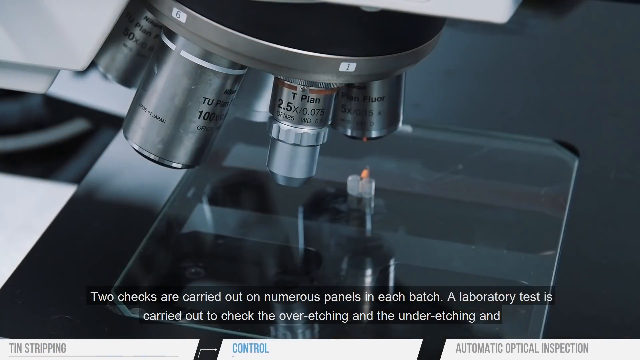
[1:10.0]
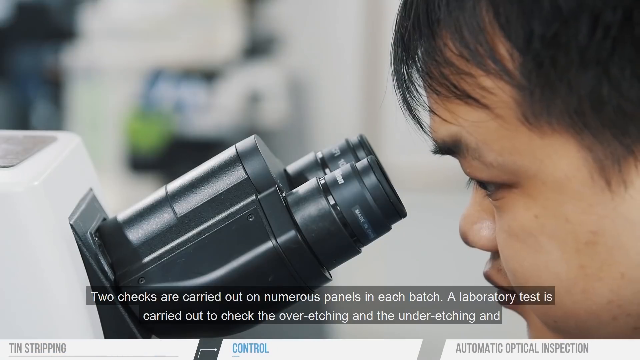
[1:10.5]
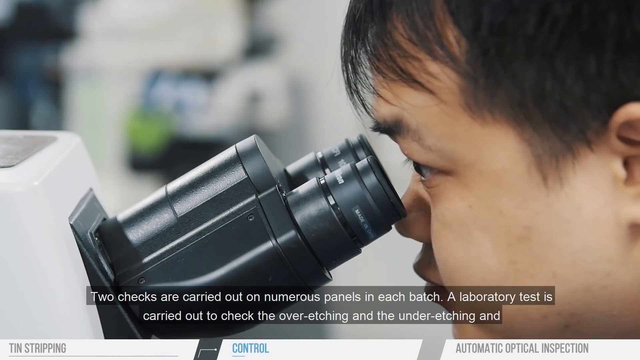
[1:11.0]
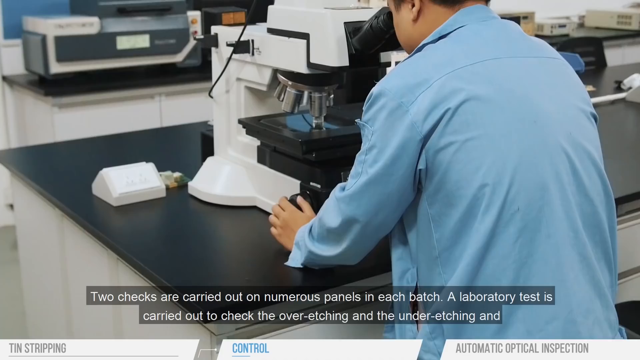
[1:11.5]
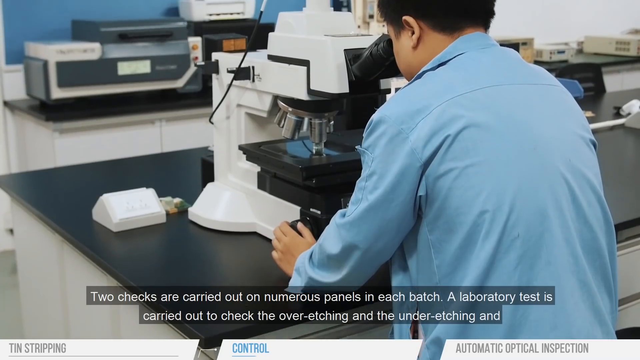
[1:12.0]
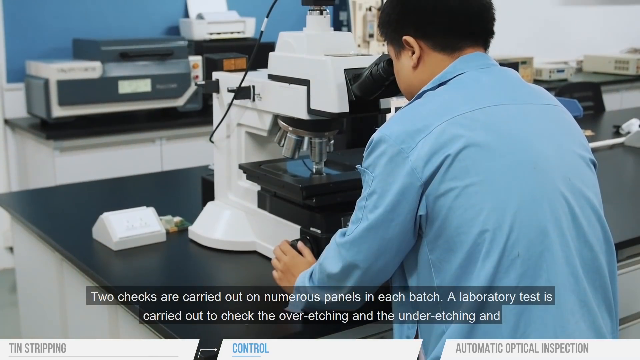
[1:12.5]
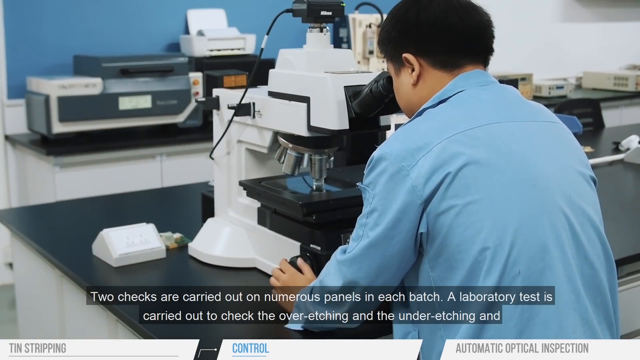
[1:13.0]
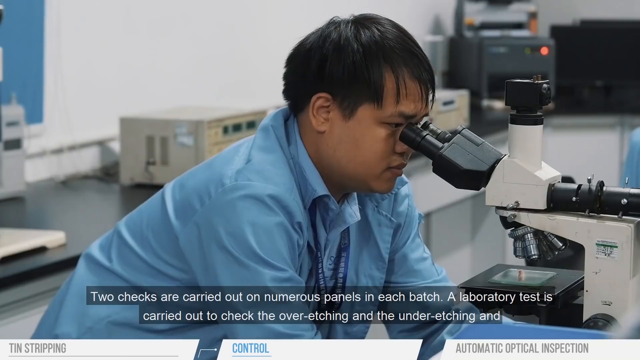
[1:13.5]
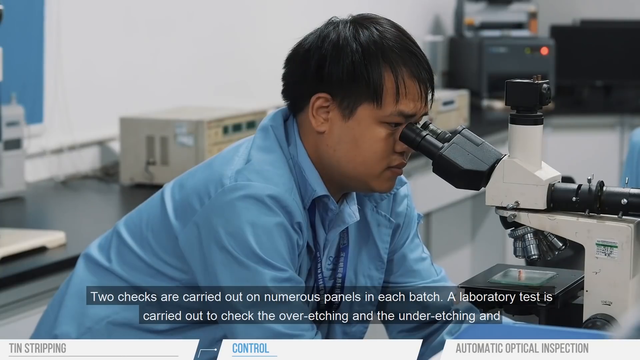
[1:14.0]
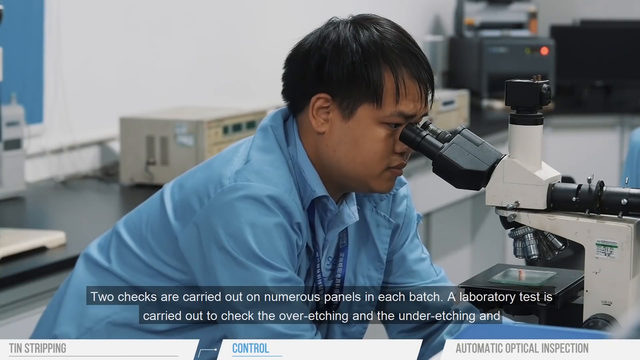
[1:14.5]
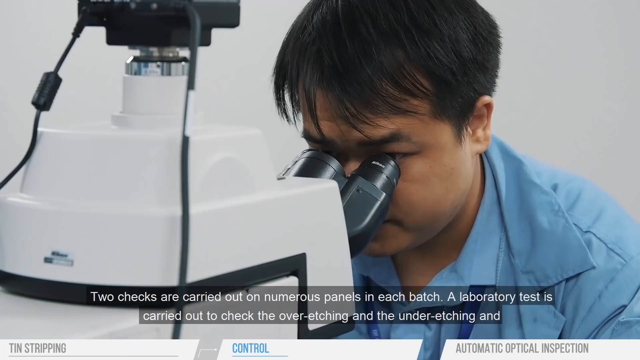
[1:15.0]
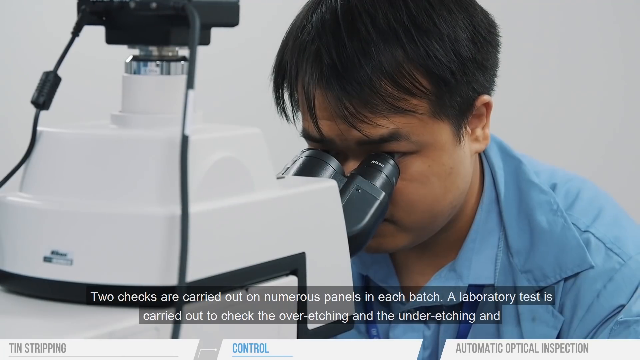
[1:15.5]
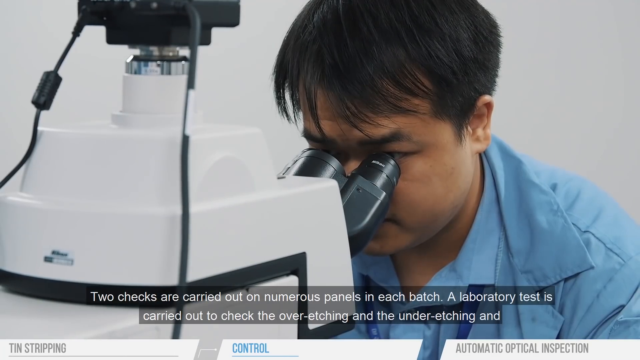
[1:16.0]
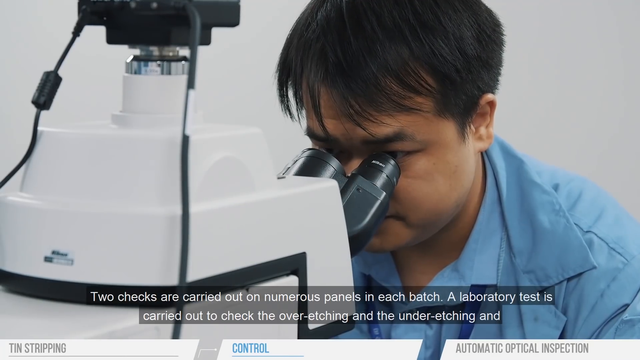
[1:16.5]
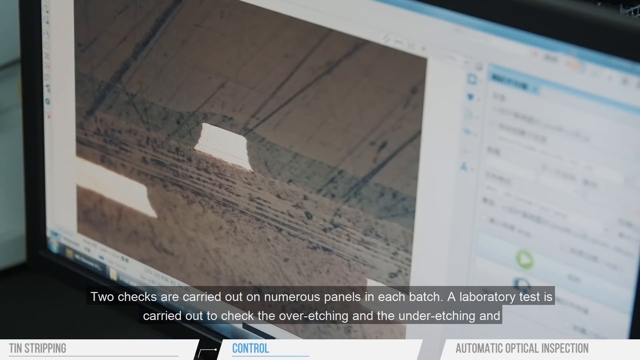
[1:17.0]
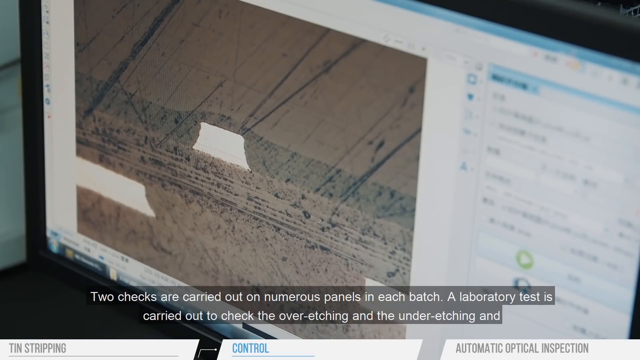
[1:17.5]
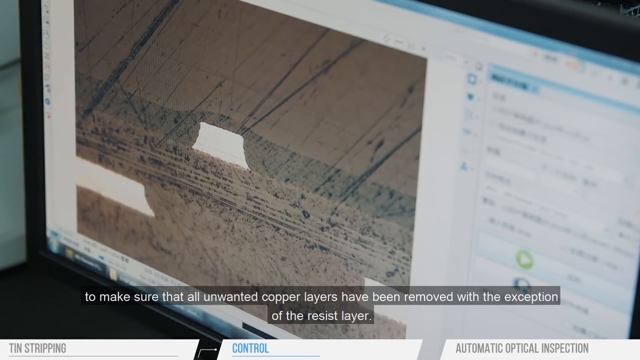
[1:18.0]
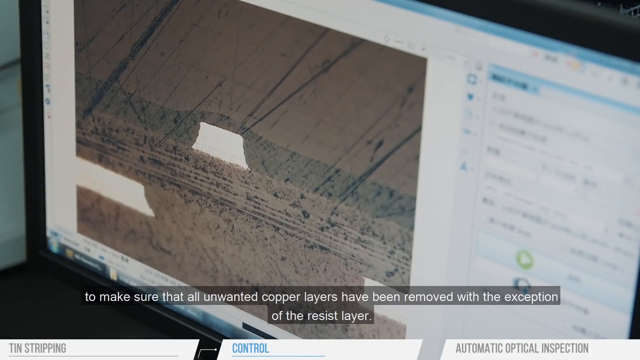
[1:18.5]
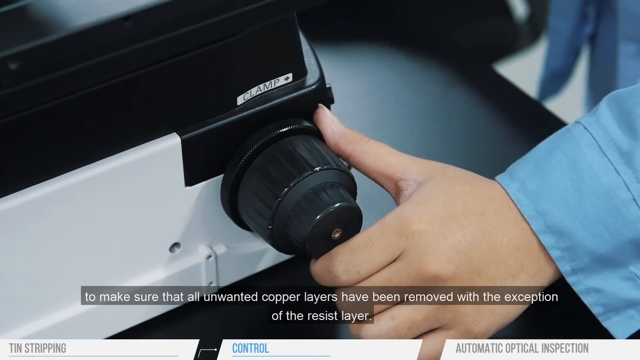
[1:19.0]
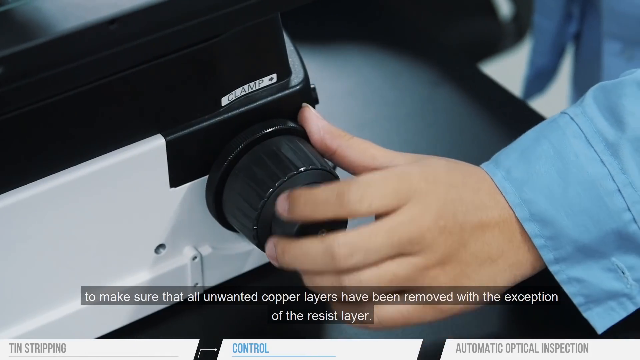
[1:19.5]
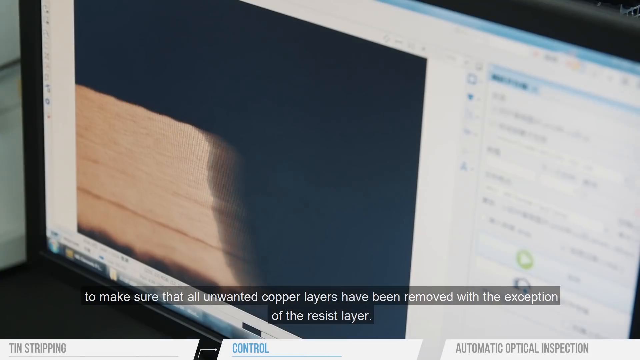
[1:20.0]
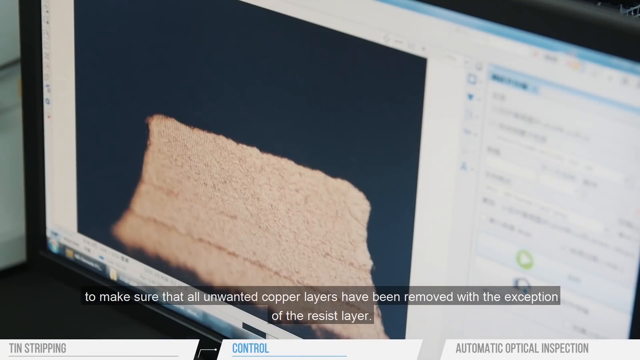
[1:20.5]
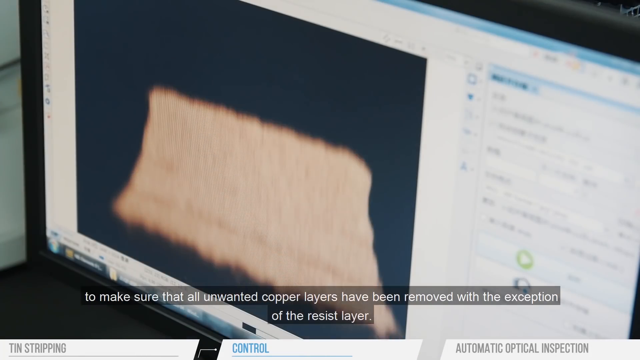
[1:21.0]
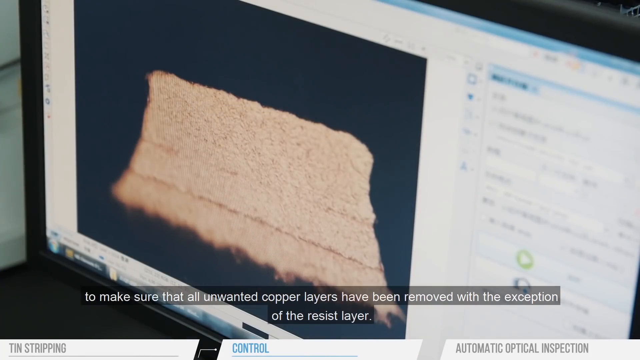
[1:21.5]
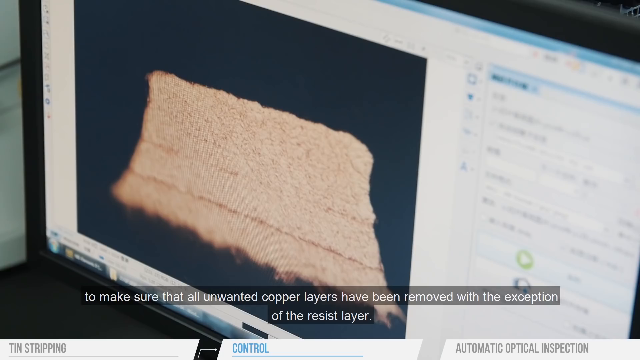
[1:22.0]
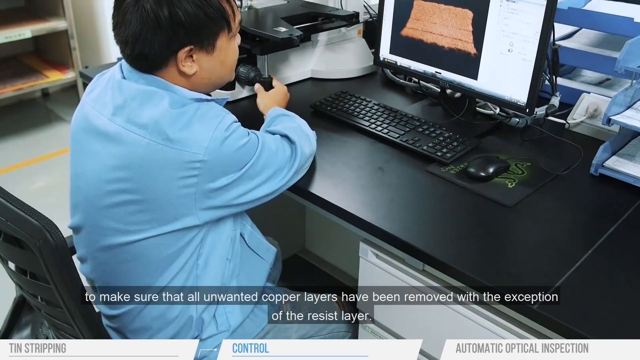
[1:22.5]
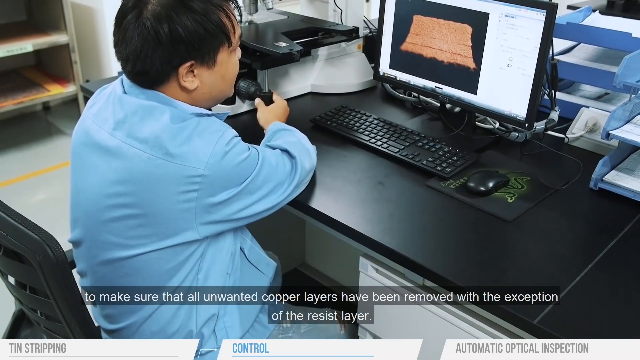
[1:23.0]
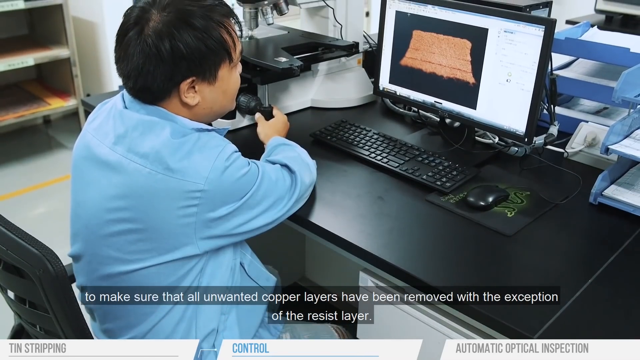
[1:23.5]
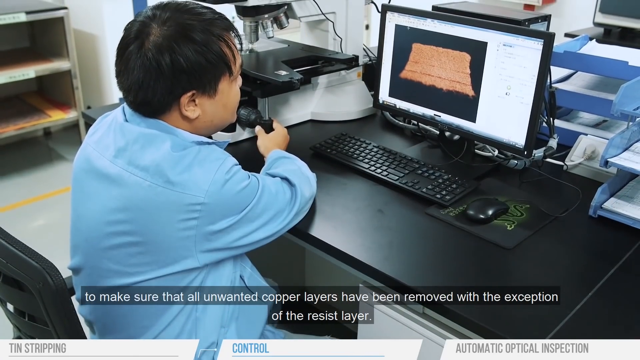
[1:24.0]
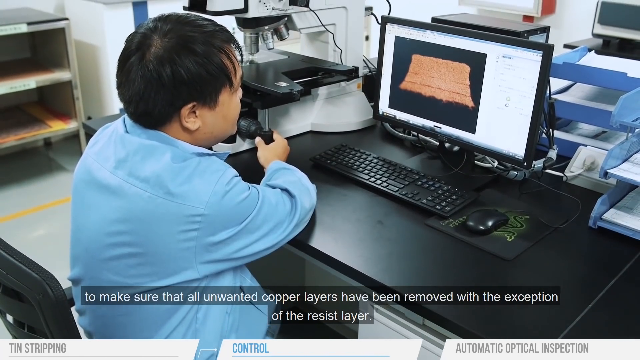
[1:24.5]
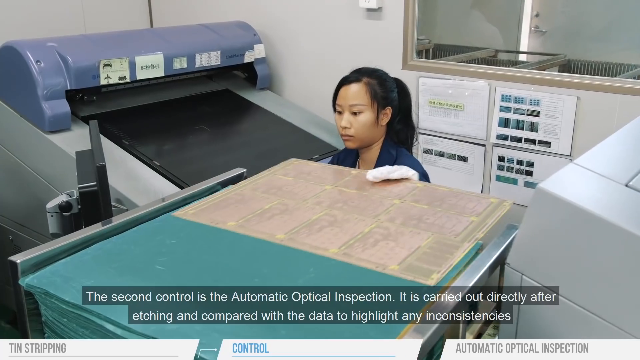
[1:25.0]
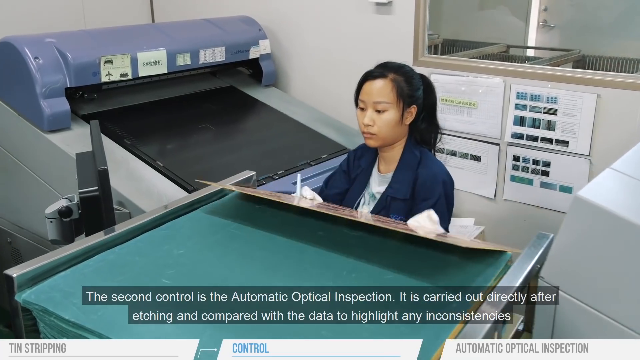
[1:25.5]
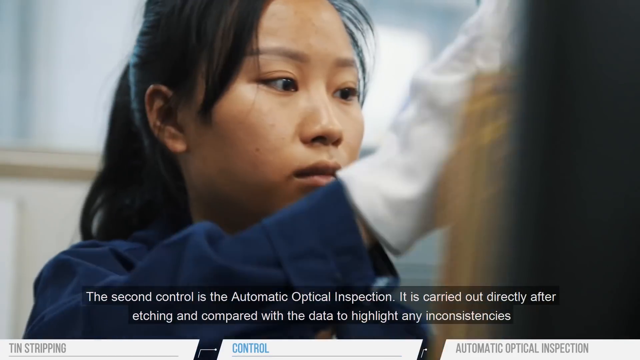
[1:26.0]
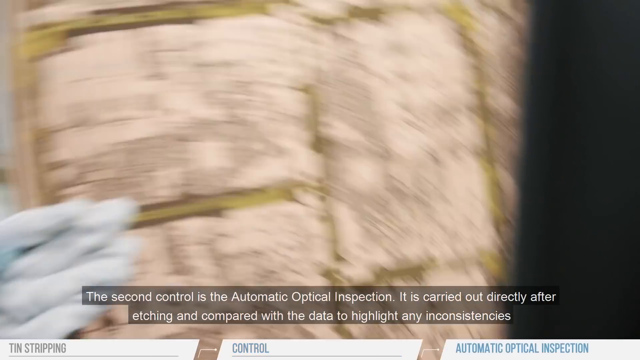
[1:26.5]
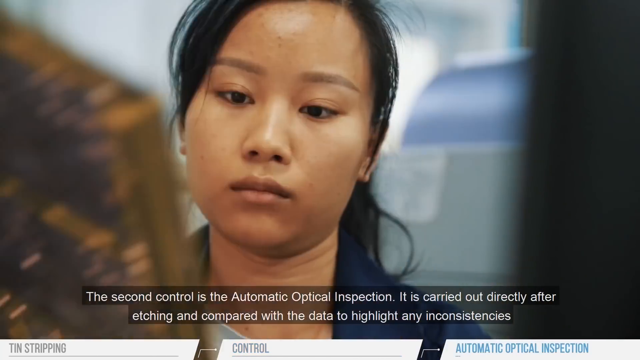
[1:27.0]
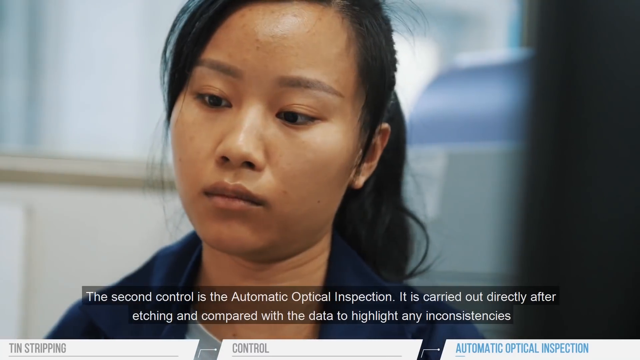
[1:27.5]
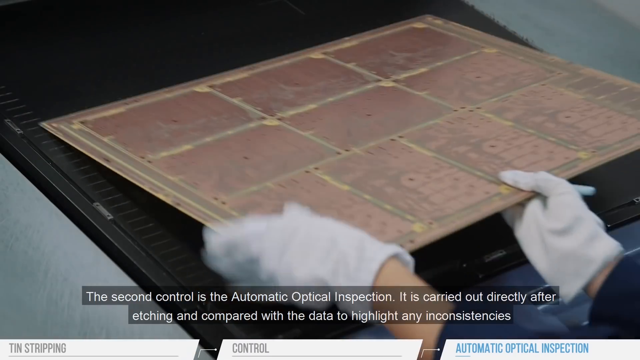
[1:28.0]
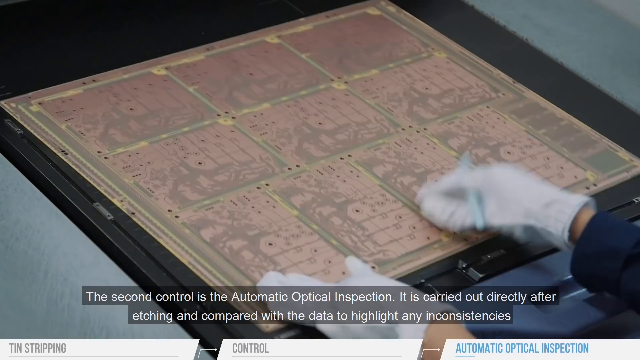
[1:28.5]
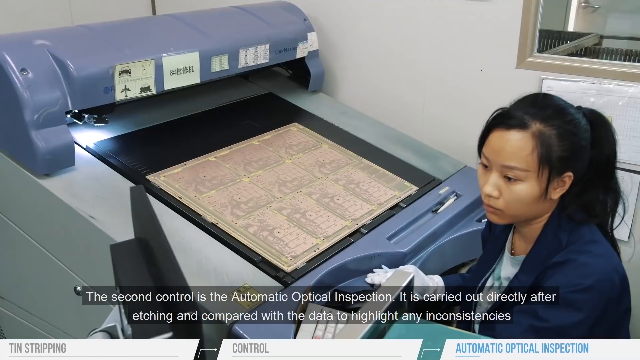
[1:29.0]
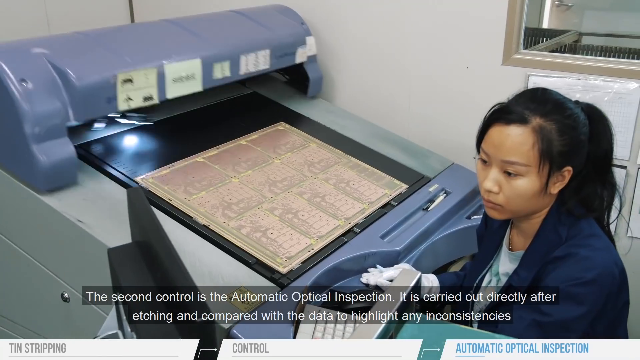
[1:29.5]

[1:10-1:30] A man looks through what is basically a microscope, checking the printed circuit boards, as text mentions "two checks are carried out on numerous panels in each batch. A laboratory test is carried out to check the over-etching and the under-etching." He looks down at the board for imperfections, and a close-up image of what he is looking for is shown. He uses a computer at a desk with a magnifier. The footage switches to a woman in another inspection area who wears gloves and lifts a circuit board with her gloved hand, while text reads "the second control is the automatic optical inspection. It is carried out directly after the etching and compared with the data to highlight any inconsistencies." She looks closely at the boards for defects, using something almost like a scanner that scans the board.